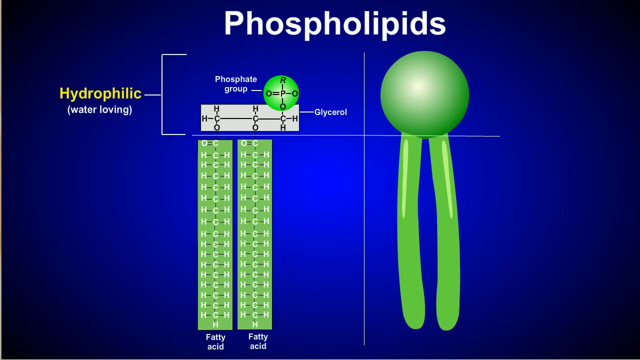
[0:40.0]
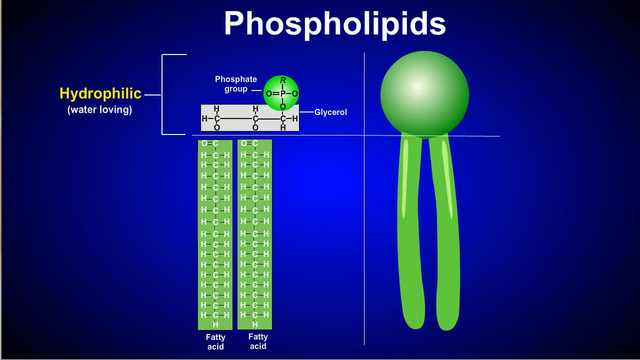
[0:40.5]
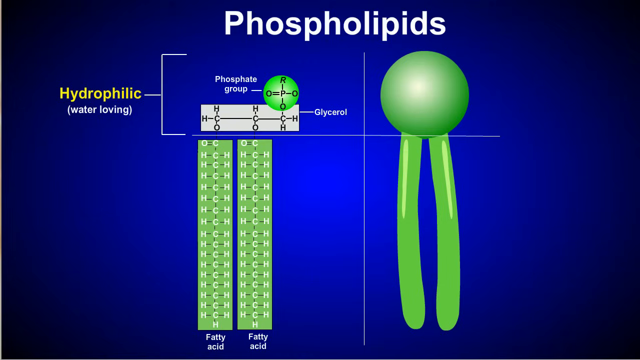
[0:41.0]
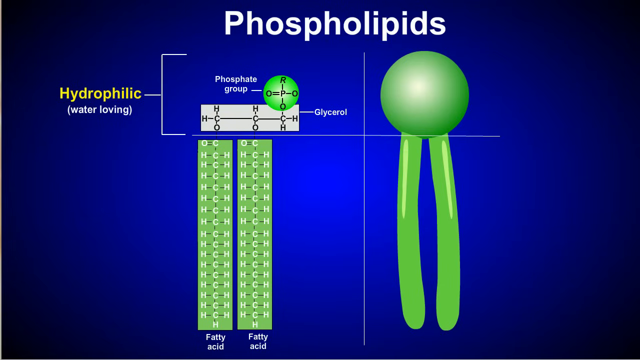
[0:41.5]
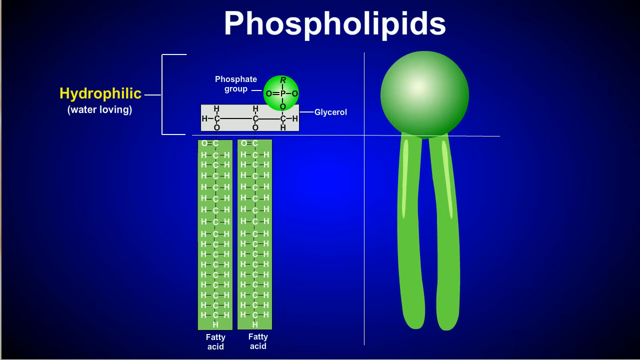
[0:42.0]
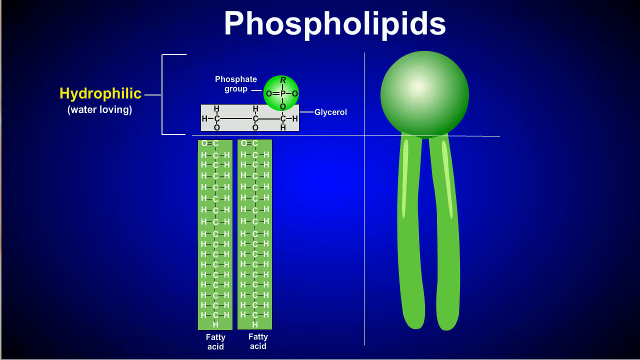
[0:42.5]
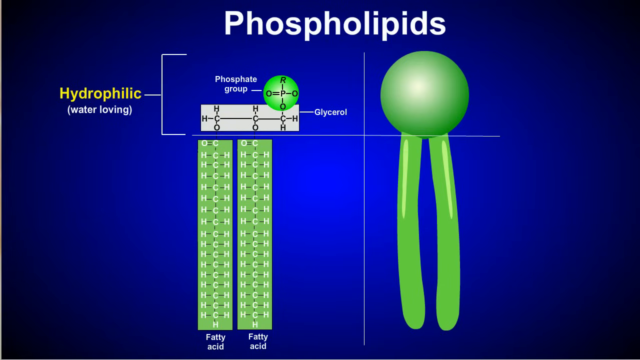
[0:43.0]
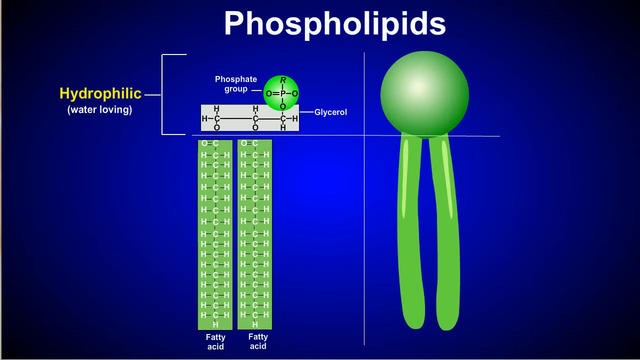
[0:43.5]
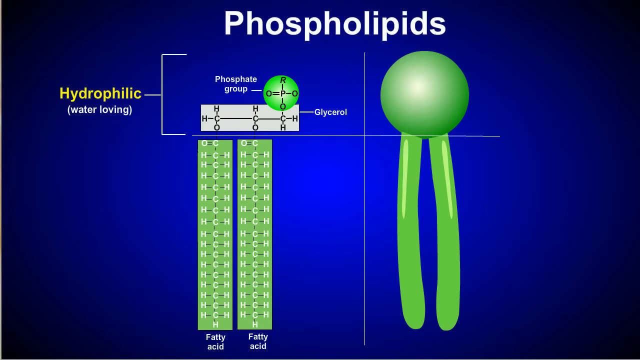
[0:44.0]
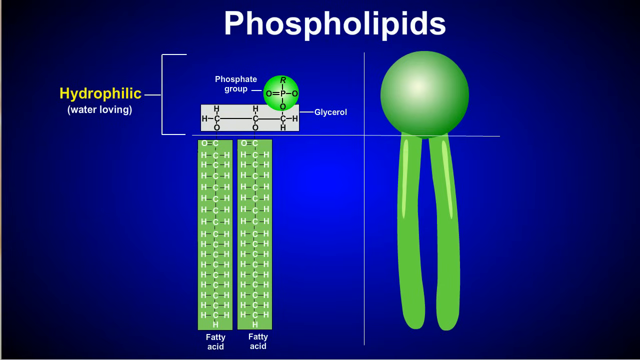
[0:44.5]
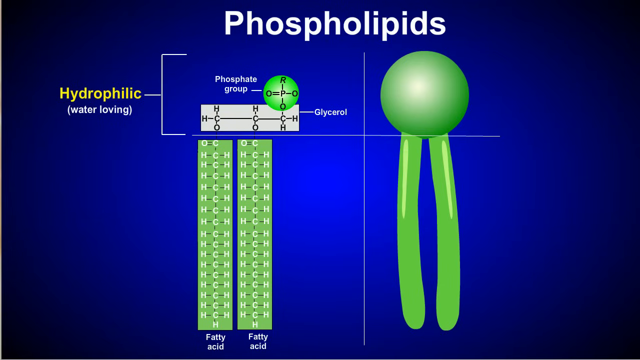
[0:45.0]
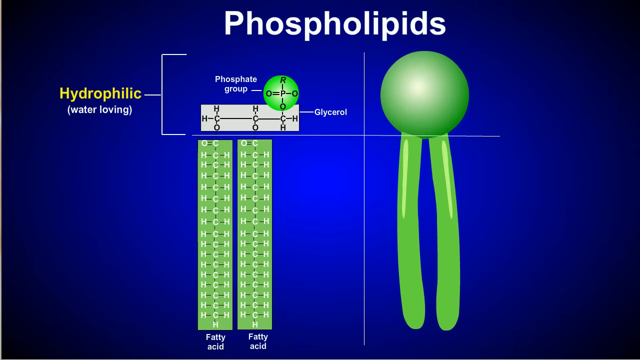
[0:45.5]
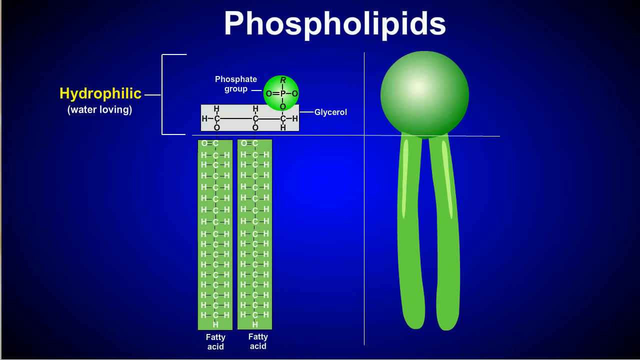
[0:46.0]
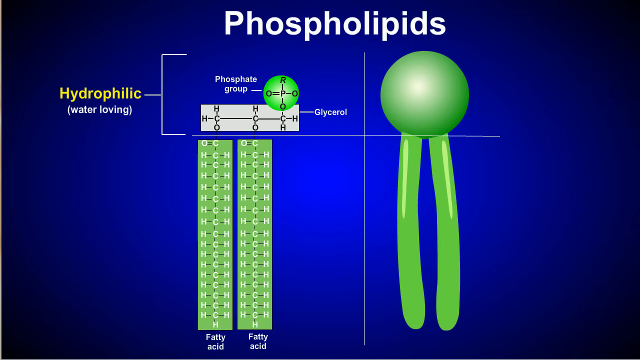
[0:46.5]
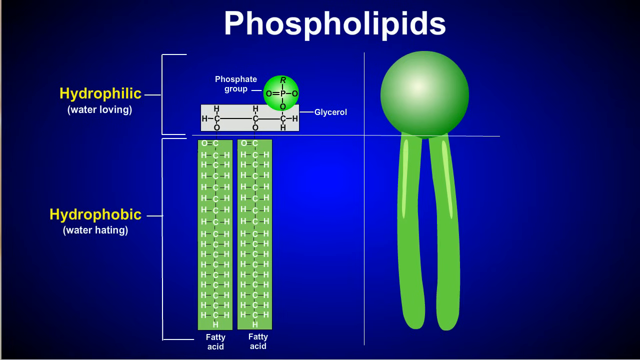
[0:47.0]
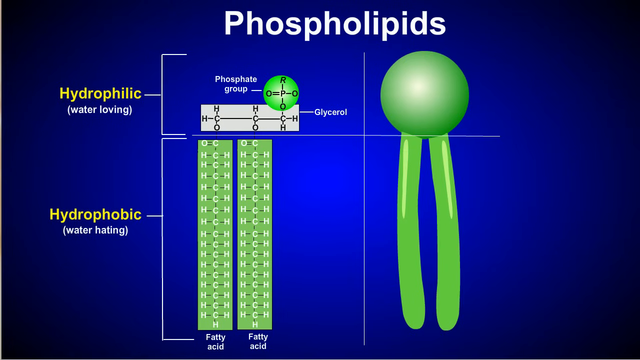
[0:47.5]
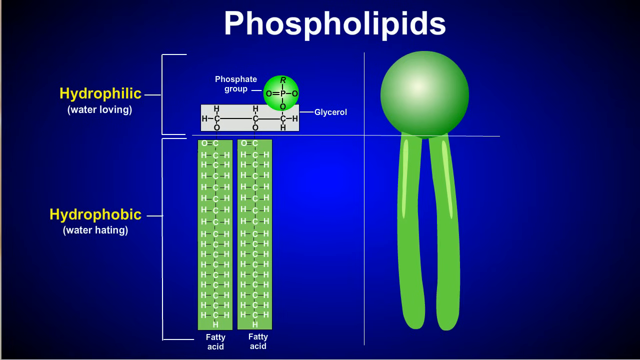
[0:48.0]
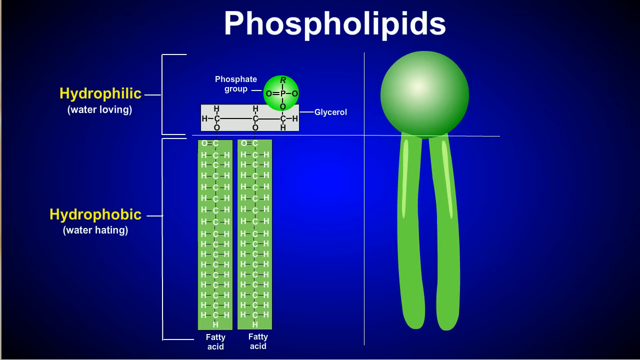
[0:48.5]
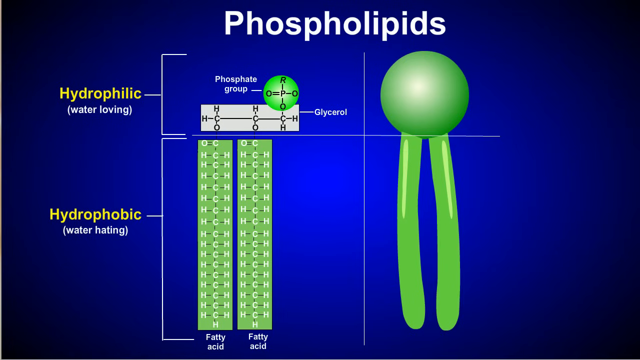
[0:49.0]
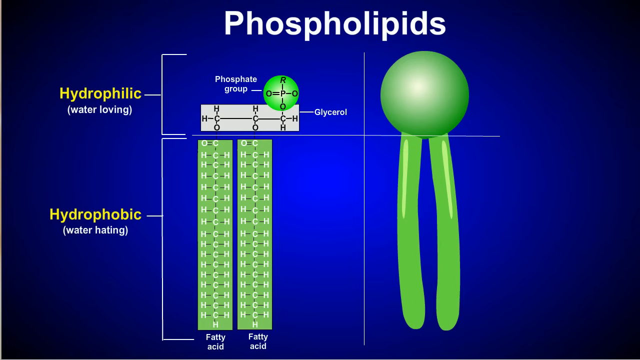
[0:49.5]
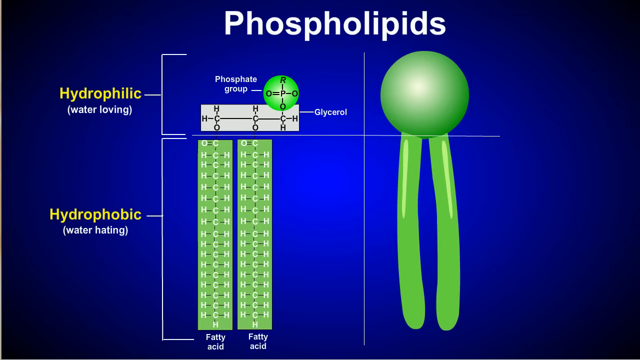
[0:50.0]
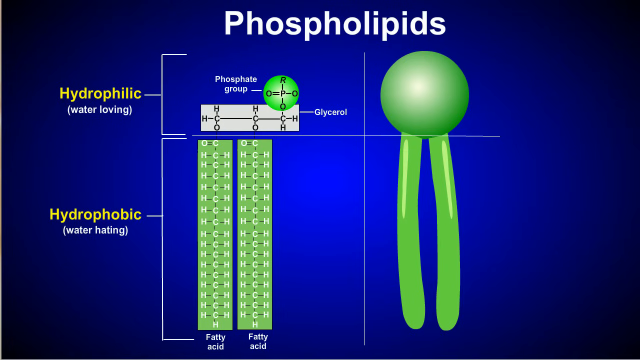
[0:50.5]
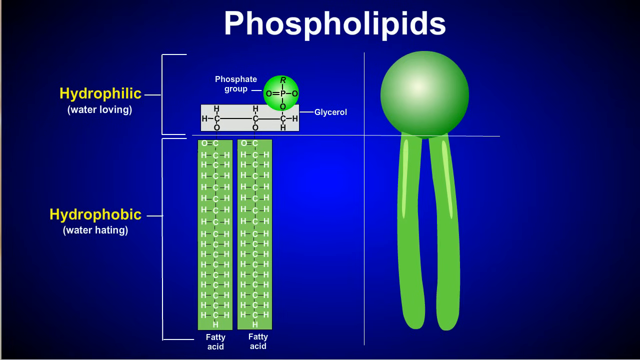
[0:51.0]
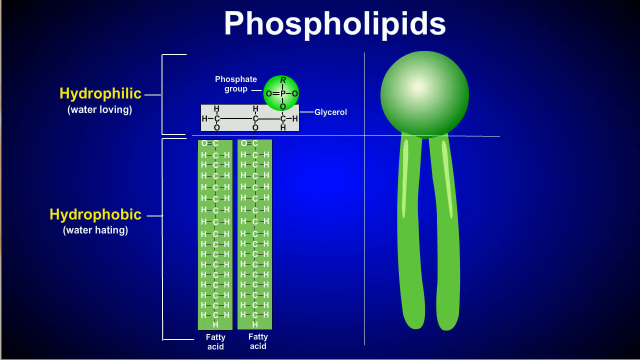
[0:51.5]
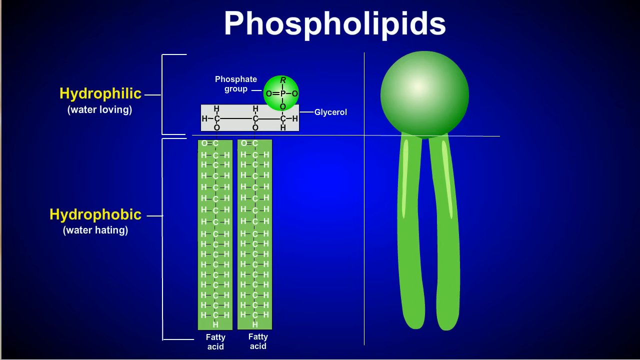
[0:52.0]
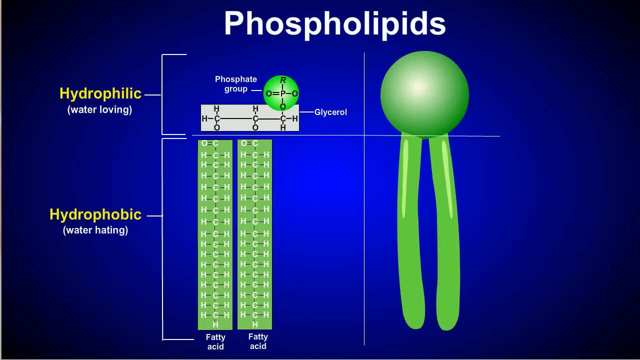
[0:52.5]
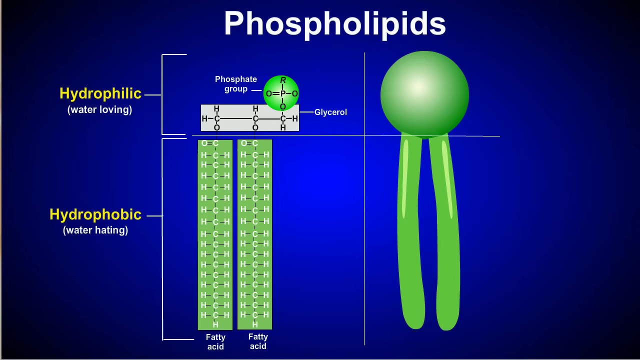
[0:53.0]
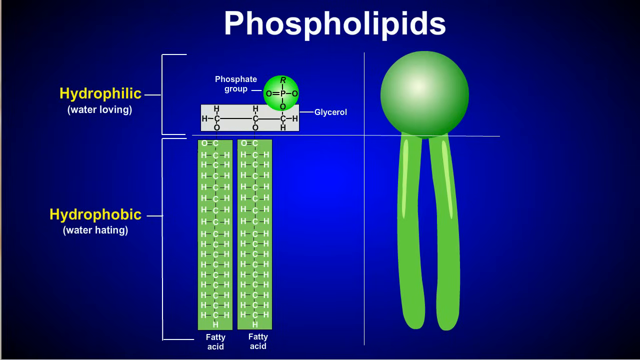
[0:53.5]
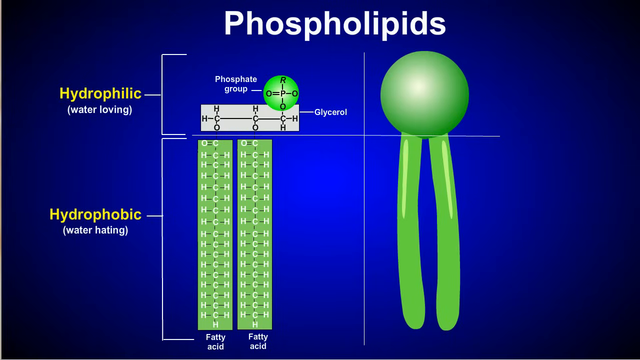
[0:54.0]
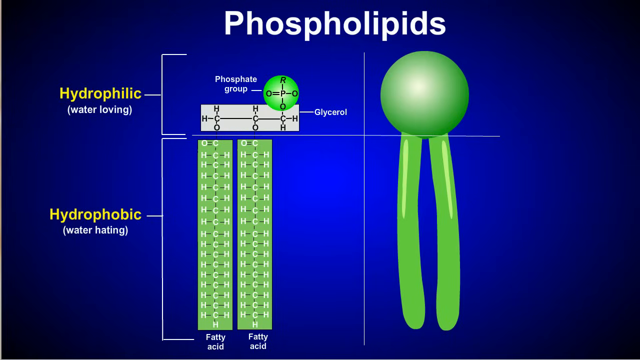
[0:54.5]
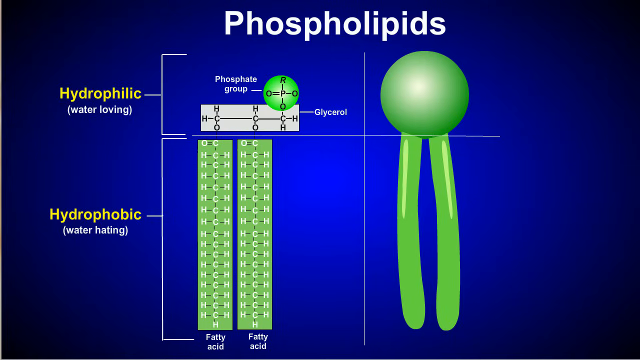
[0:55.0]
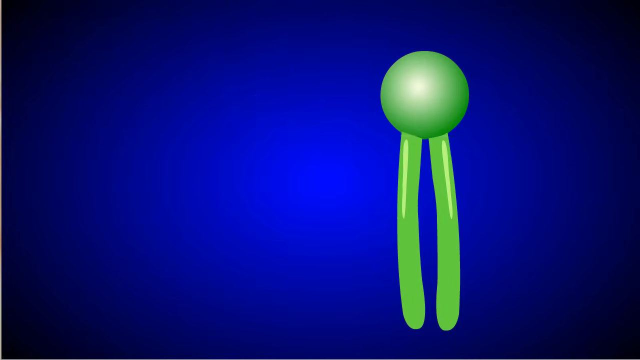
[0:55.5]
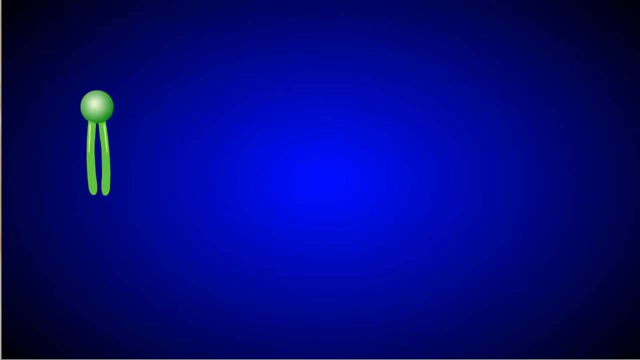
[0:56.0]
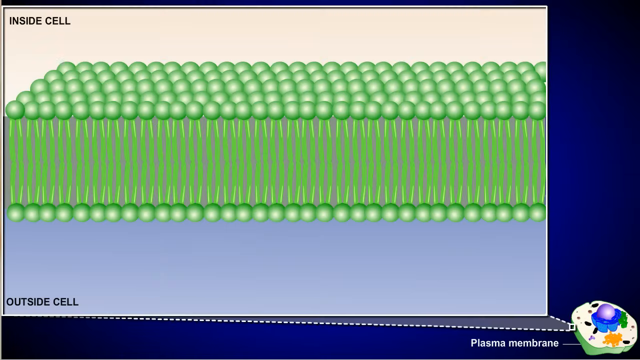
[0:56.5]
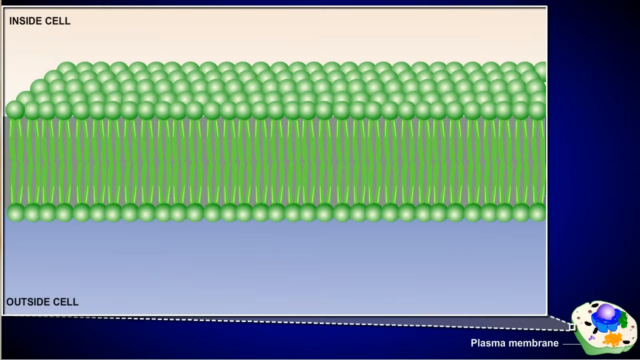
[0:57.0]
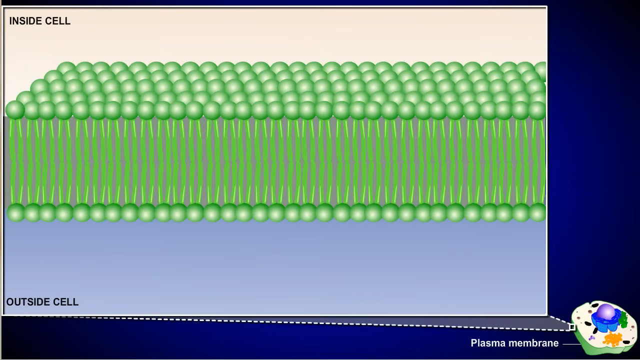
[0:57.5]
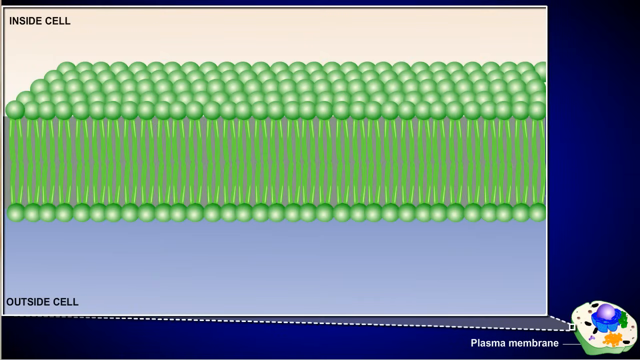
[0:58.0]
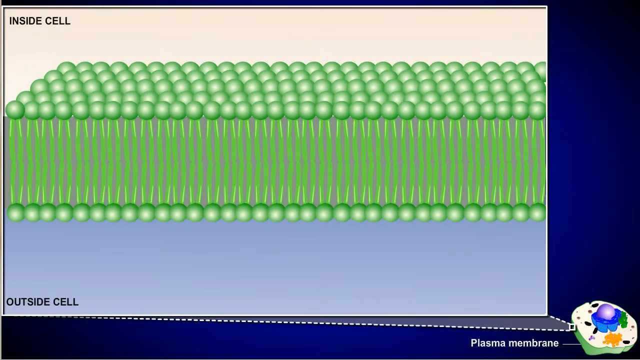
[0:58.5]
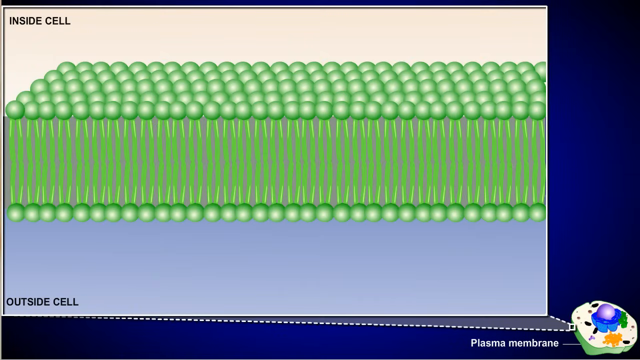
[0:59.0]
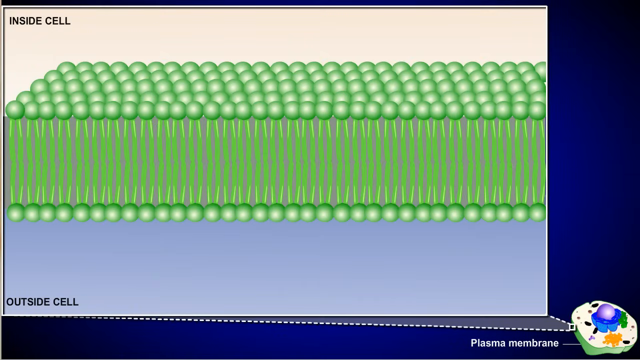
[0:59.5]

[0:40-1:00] White lettering at the top says "phospholipids" on a blue background. A green circle is to the right with two green tubes below it. At the far right, yellow lettering says "hydrophilic," with white lettering below it saying "water-loving." A white line leads into an open square box. White lettering to the right of that says "phosphate group," pointing at a green circle with lettering running downwards as R-P-O and across as O=P-O. Below that is a white box whose columns read H-C-O twice, with white lettering inside saying "glycerol." Two green boxes each have white lettering at the very bottom saying "fatty acid"; the white lettering inside them reads O=C with H-C-H below, continuing down to the last line, where there is an H at the bottom of each box. A new line appears reading "hydrophobic water hating." The next image has a teal background at the top with black lettering on the left saying "inside cell." A row of about five green circles stretches from left to right, with green stems going downwards and attaching to another green stem of green circles at the bottom. The bottom portion is gray, with lettering on the left reading "outside cell." There is a white dotted line at the bottom, and white lettering on the bottom right says "plasma membrane." The membrane itself is at the bottom right: a purple circle in the middle with a blue wall around it, green tubing to the right, orange tubing at the bottom center, brown dots around it, white background, and green underneath.